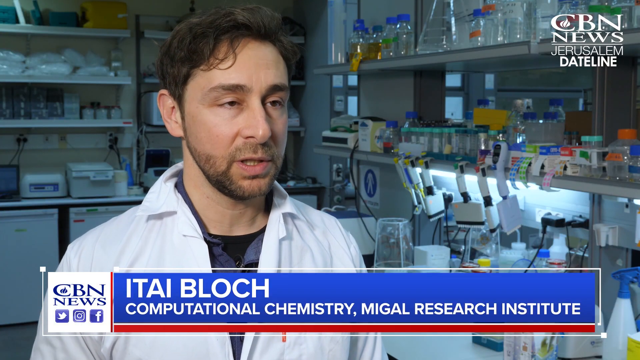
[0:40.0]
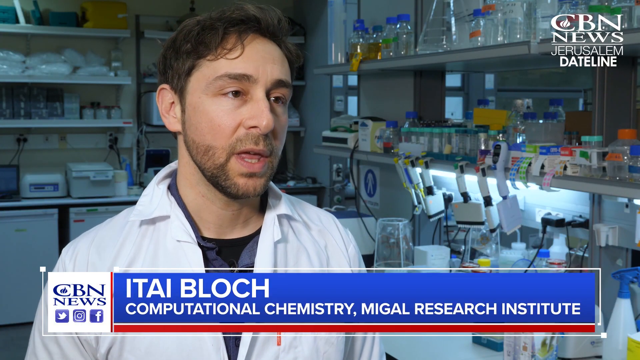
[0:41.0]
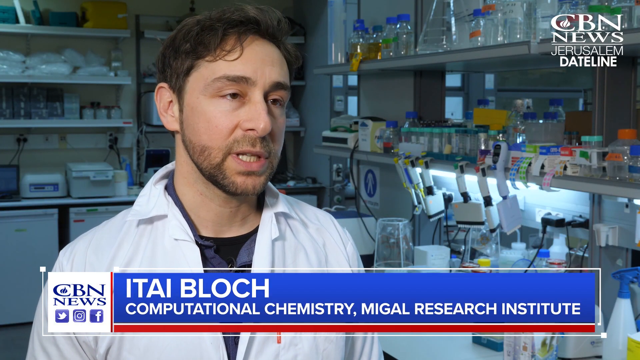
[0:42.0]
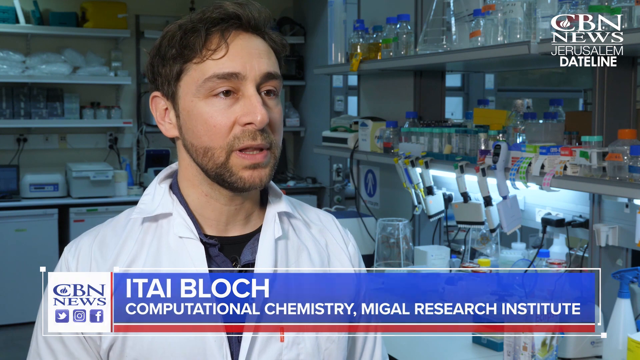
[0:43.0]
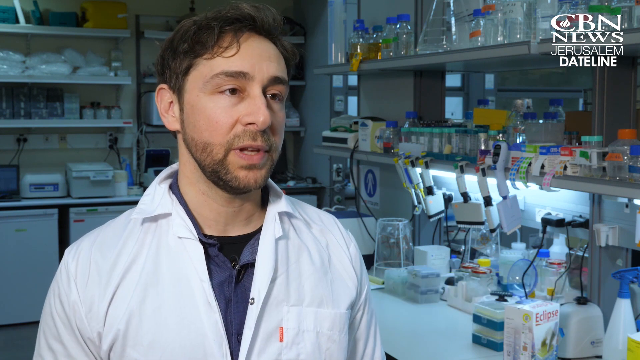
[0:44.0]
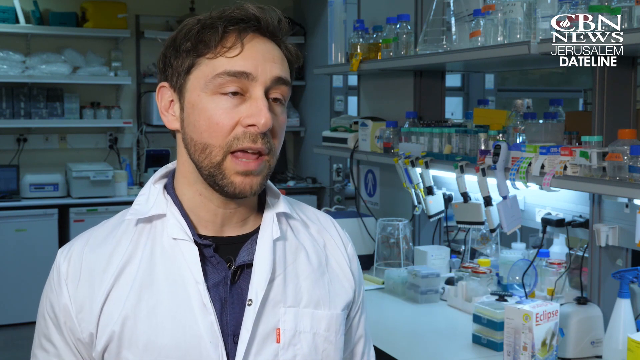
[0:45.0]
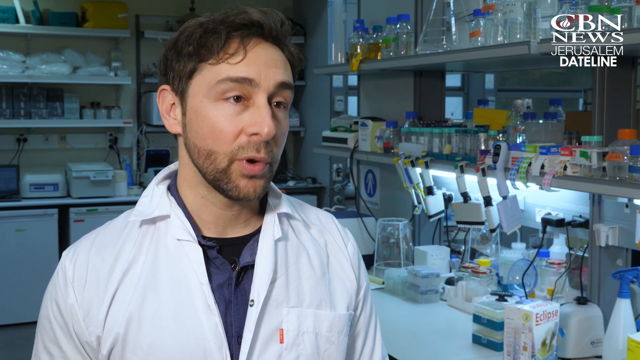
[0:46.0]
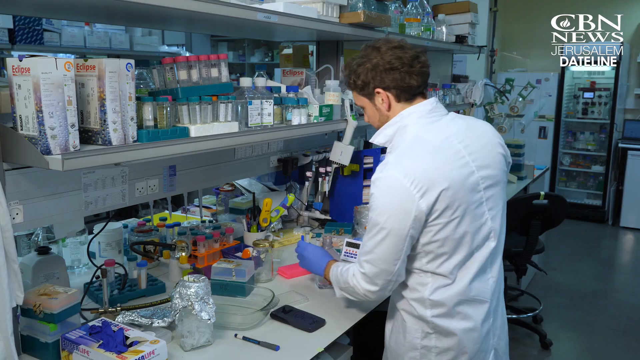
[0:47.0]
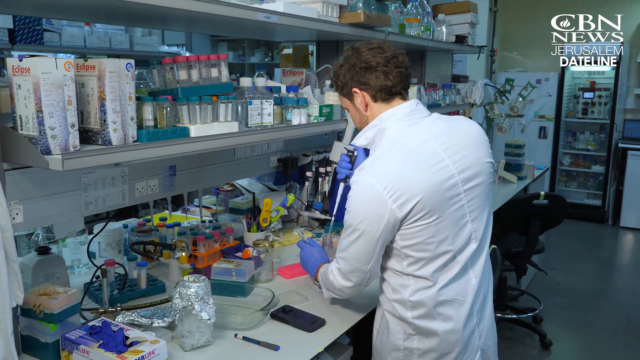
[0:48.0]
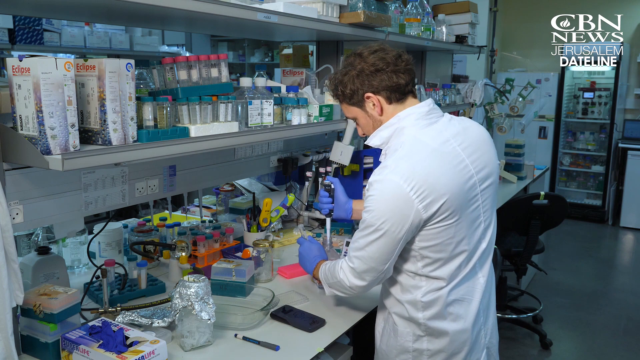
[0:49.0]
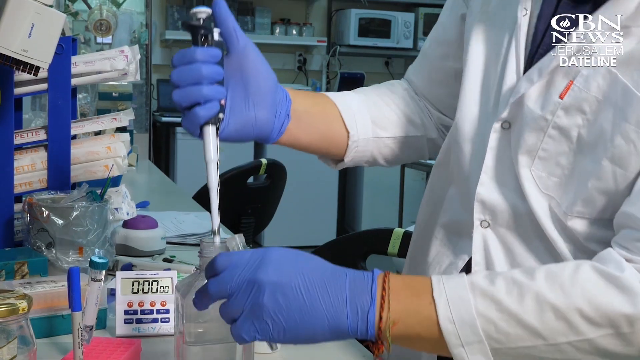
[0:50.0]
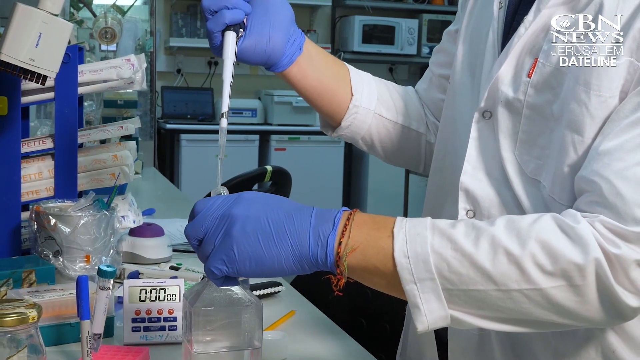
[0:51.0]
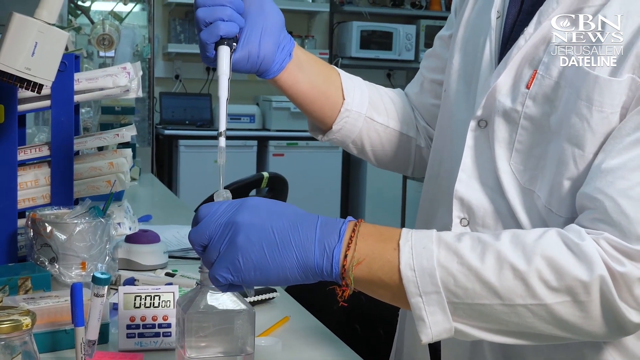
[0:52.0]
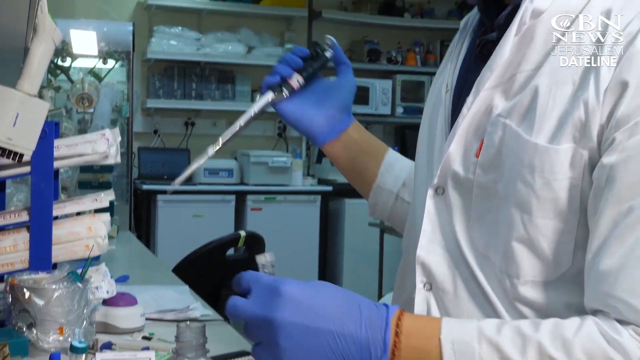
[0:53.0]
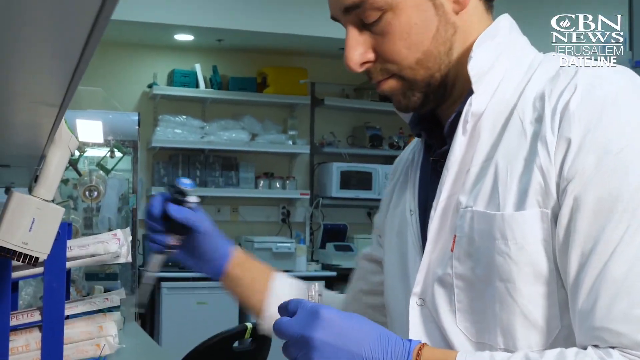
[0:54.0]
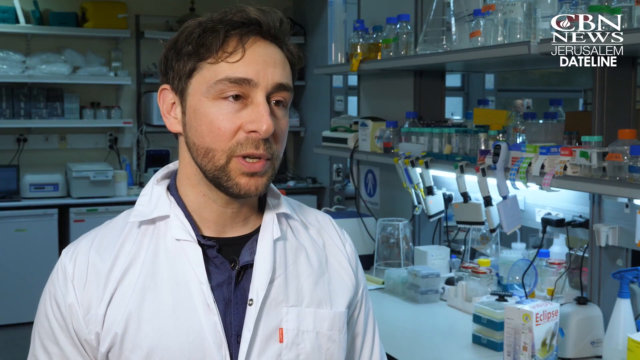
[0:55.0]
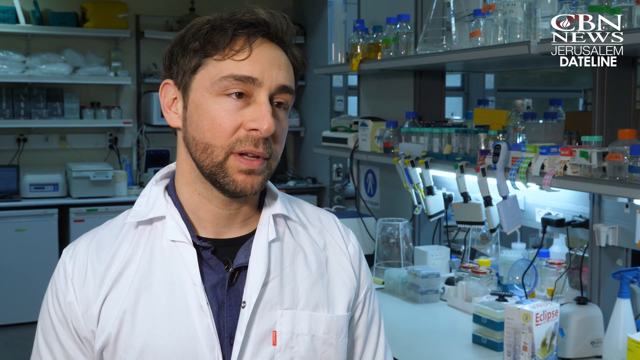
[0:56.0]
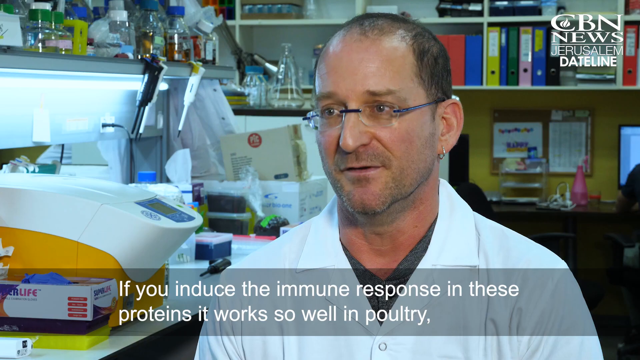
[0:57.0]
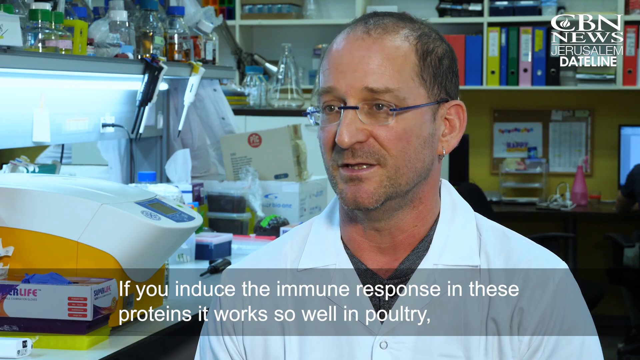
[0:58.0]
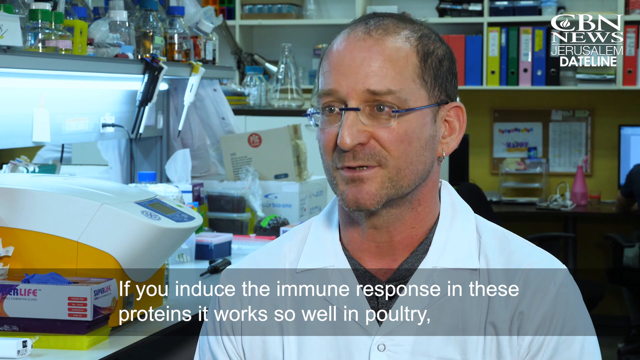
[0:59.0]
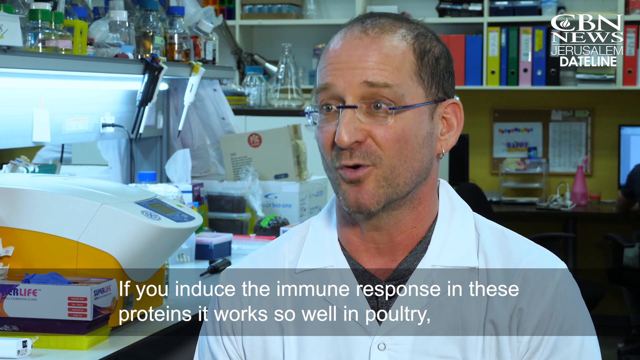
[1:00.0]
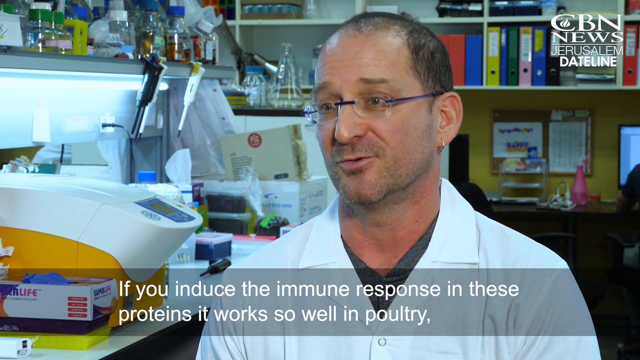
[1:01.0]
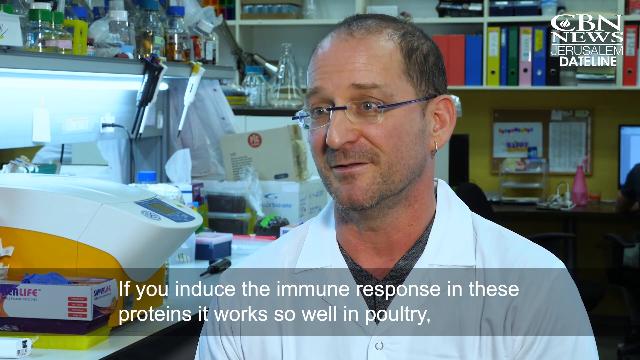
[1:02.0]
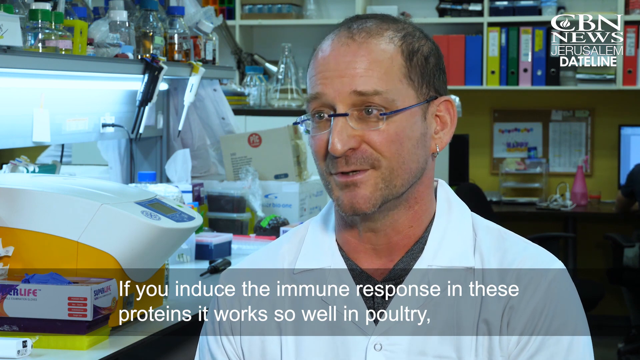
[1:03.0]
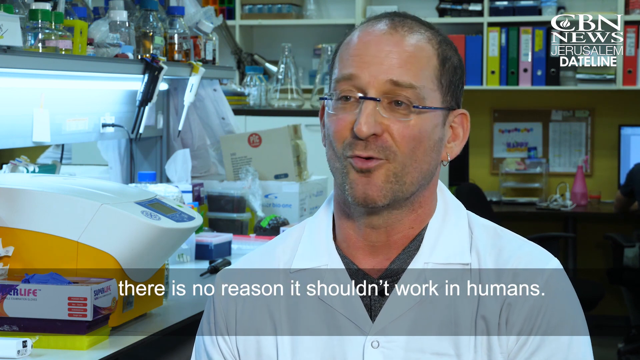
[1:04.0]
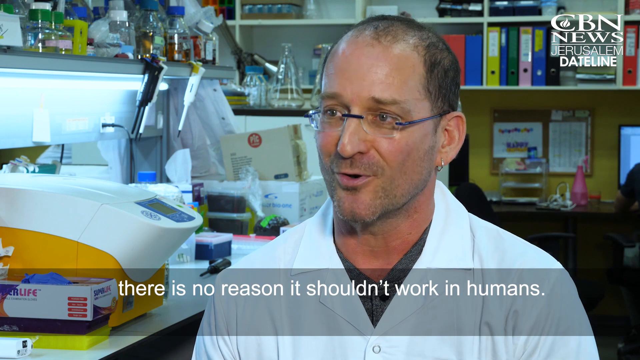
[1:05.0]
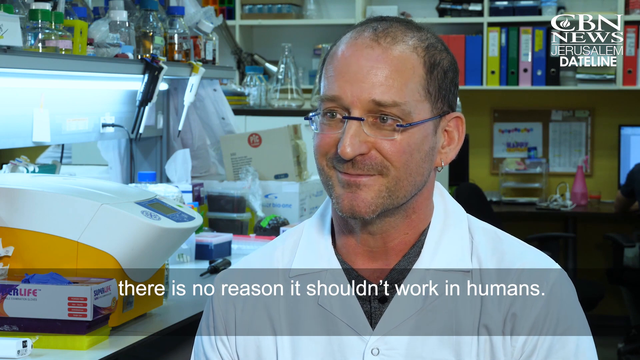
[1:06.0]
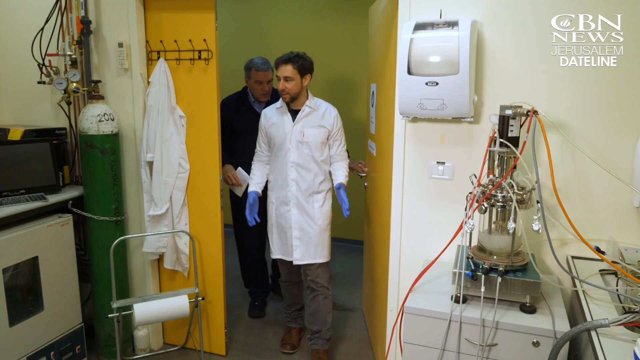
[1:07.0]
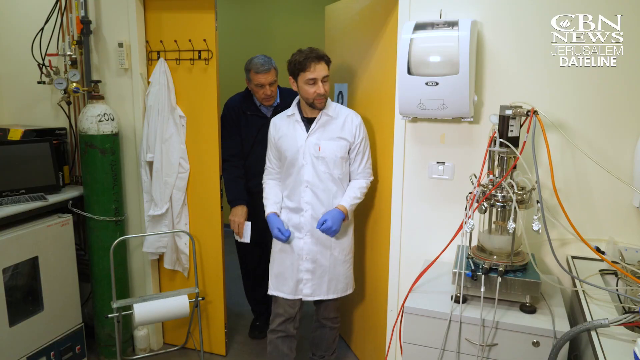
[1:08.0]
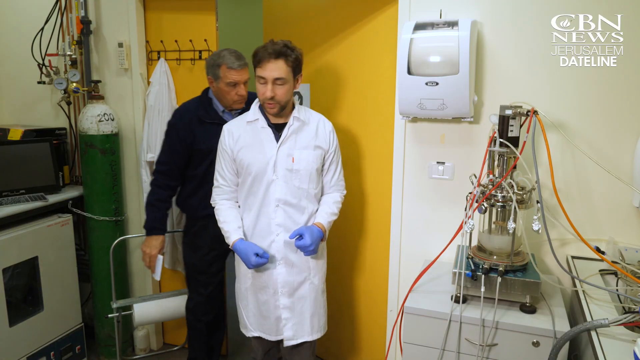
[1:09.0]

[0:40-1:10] Another interview takes place with a scientist who may or may not be the first man seen. His name is Etai Block, the computational chemistry specialist at the Michael Research Institute, where the interview apparently takes place. He has short black hair that is much wavier than the others', and a light goatee that seems a bit darker than the first man's. He wears a white lab coat and a sort of dark blue undershirt. The video cuts to footage of him working: he grabs a really long white dropper and puts it into a testing tube. It cuts back to him talking, then back to the man with the earring, with subtitles at the bottom that say "If you induce the immune response in these proteins, it works so well in poultry."